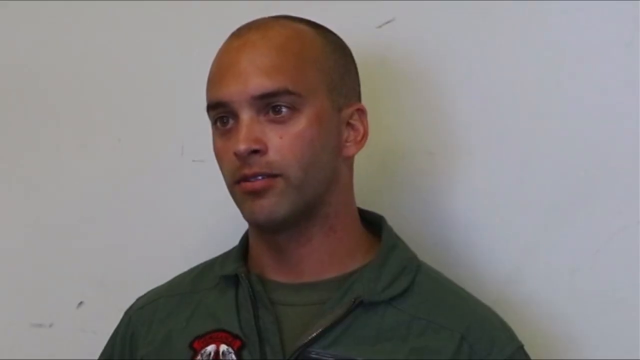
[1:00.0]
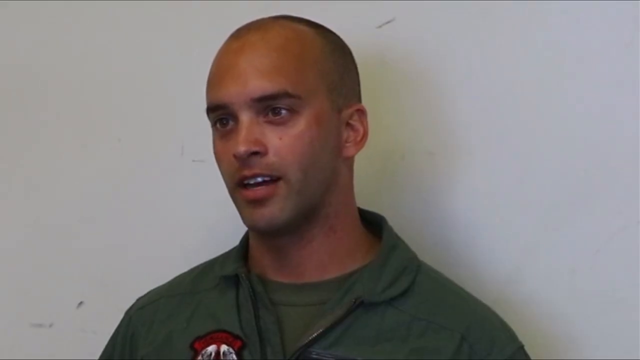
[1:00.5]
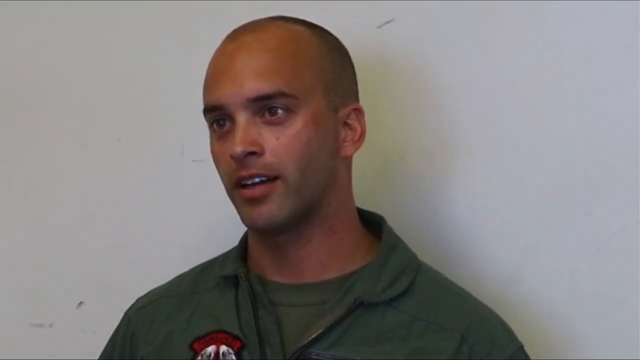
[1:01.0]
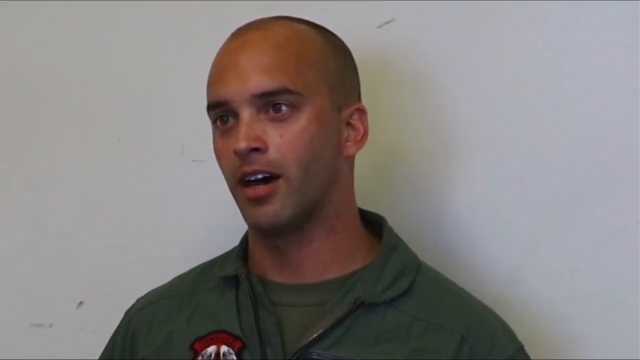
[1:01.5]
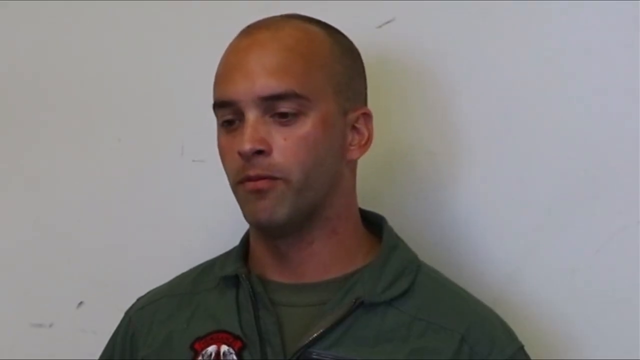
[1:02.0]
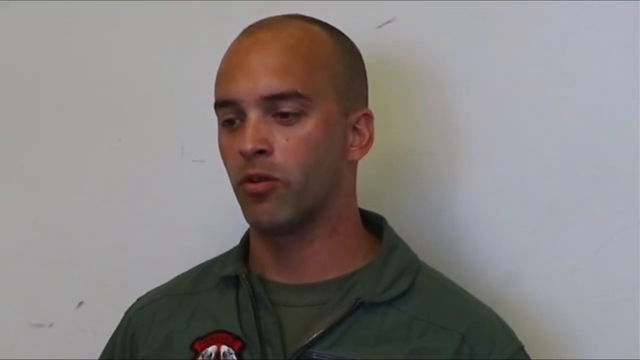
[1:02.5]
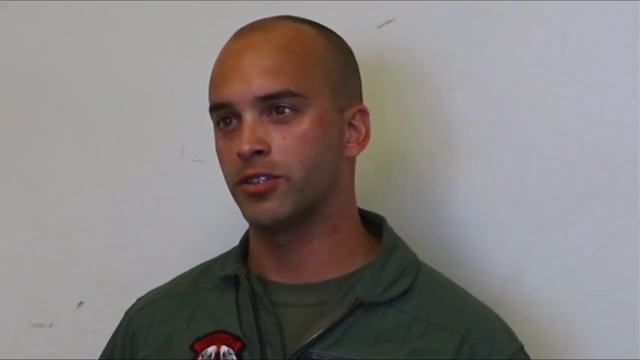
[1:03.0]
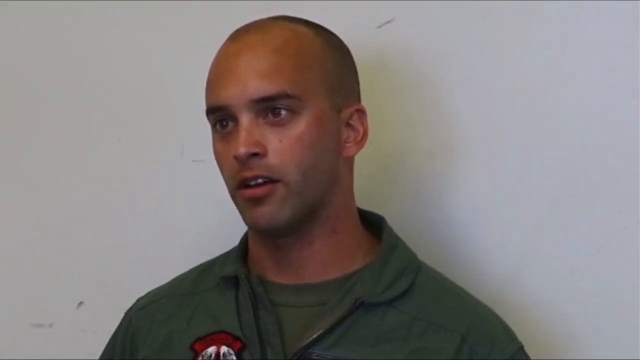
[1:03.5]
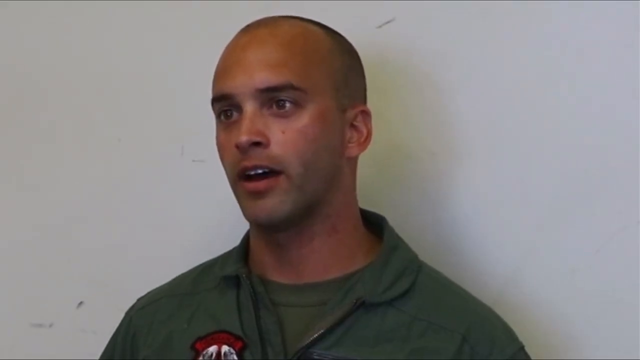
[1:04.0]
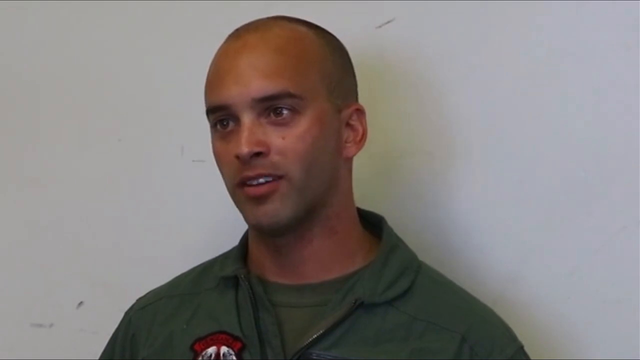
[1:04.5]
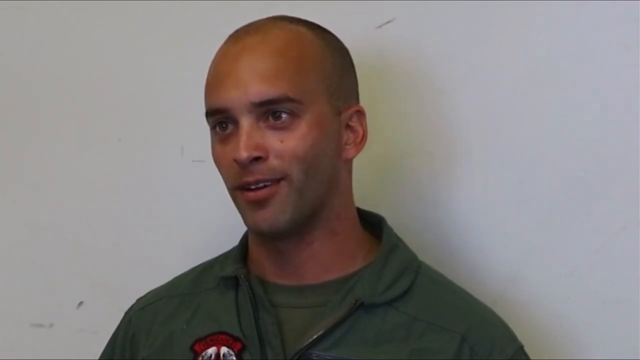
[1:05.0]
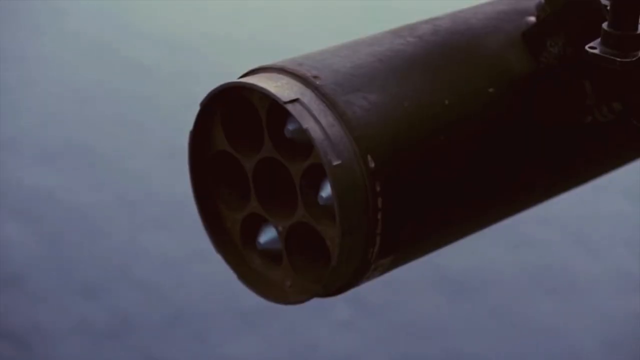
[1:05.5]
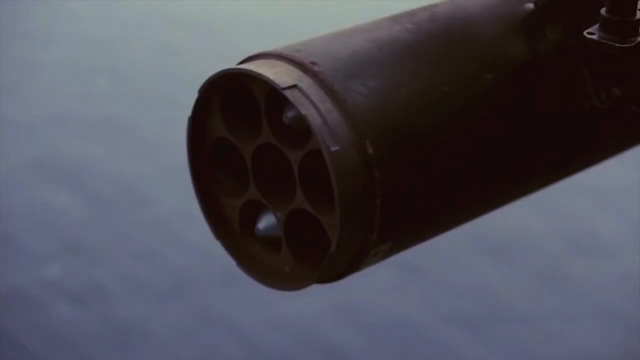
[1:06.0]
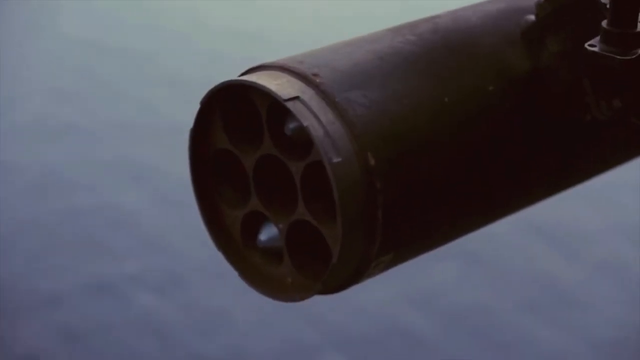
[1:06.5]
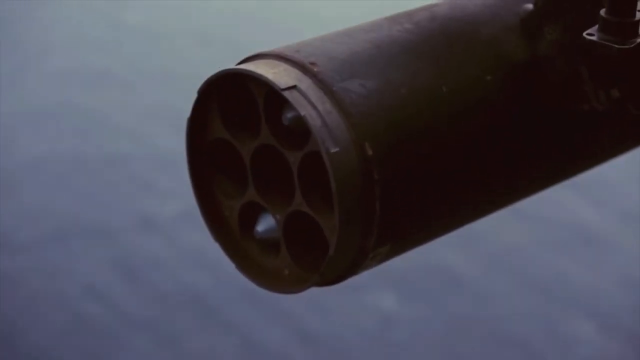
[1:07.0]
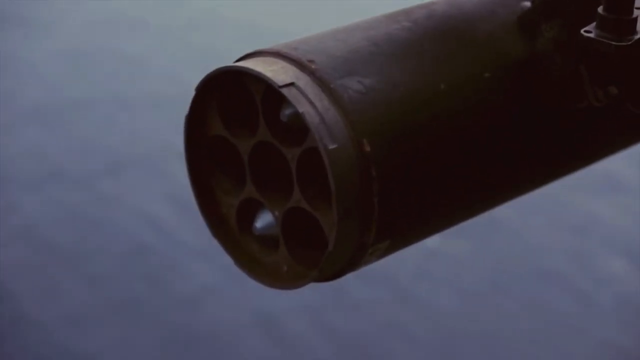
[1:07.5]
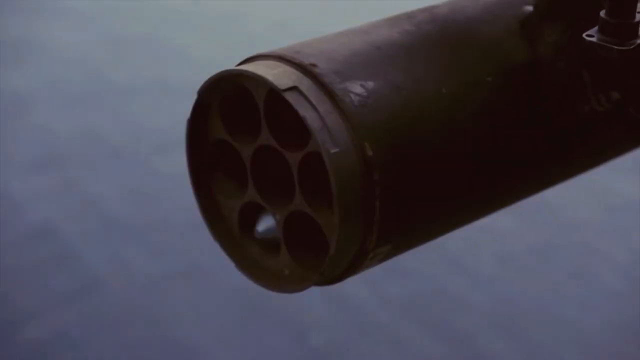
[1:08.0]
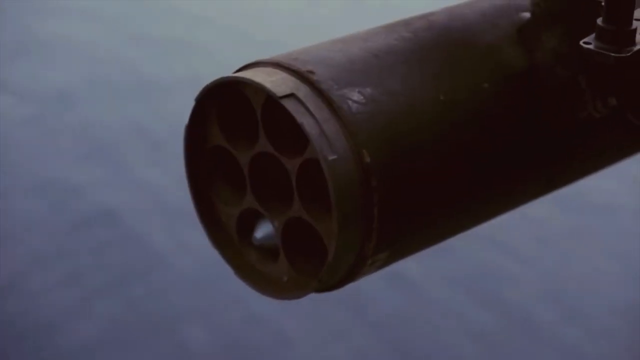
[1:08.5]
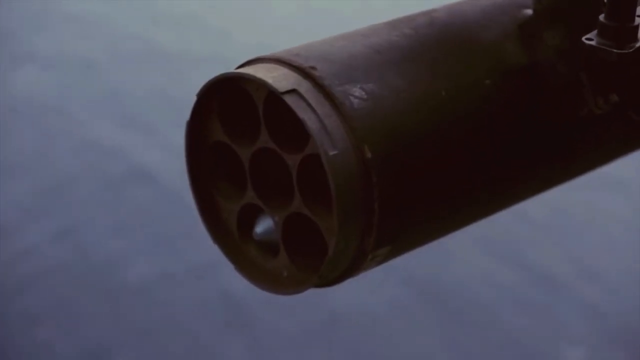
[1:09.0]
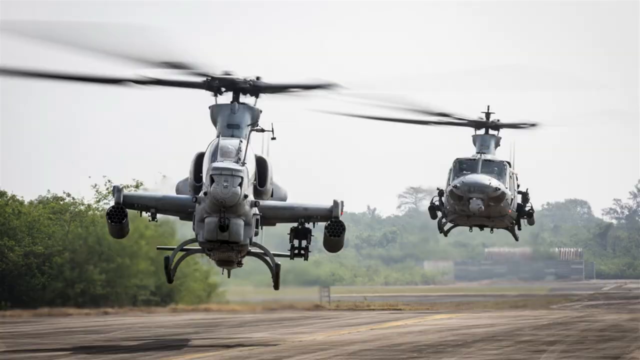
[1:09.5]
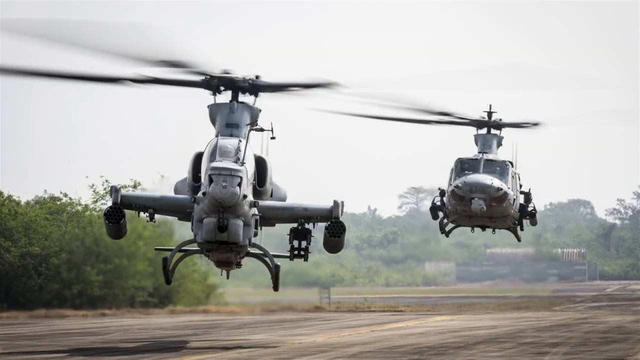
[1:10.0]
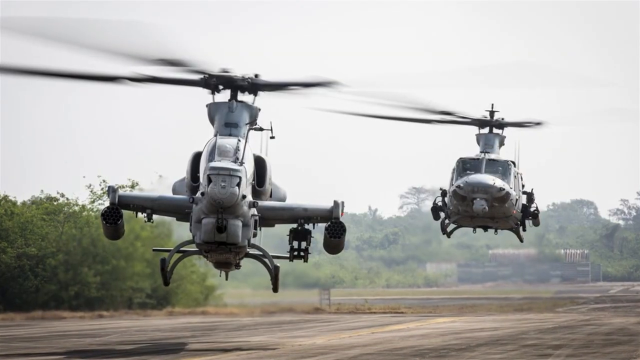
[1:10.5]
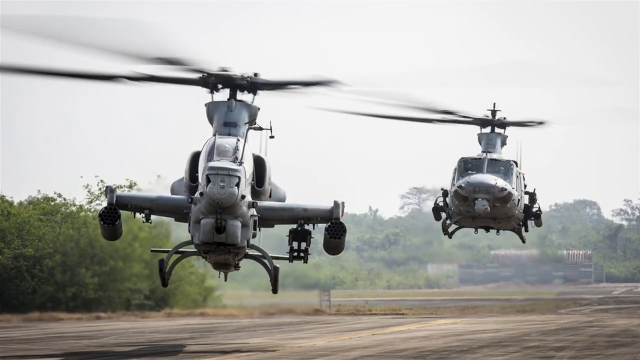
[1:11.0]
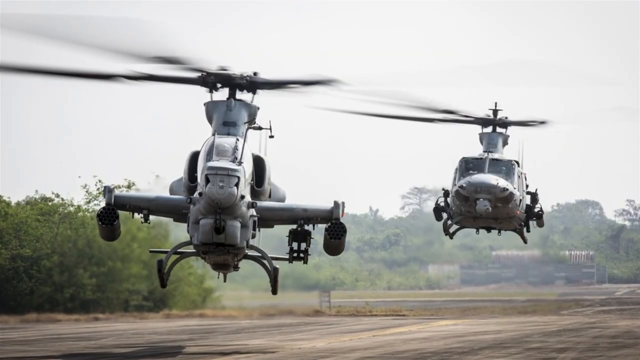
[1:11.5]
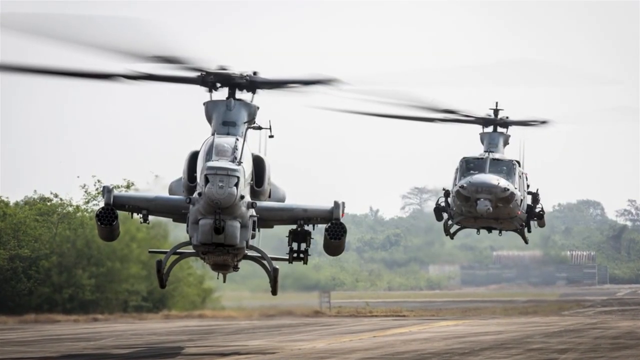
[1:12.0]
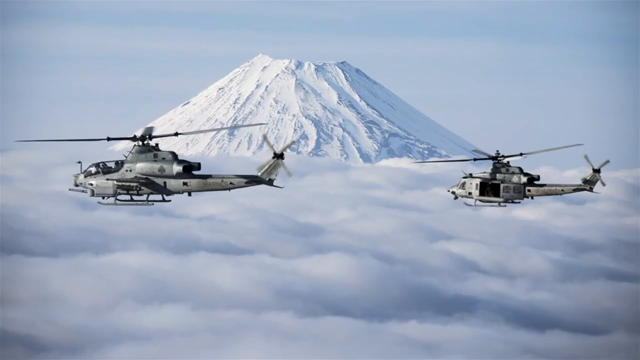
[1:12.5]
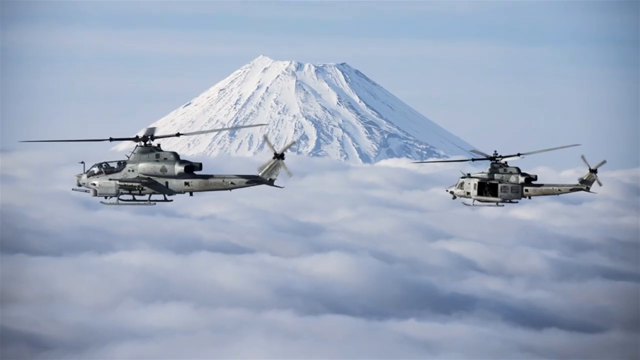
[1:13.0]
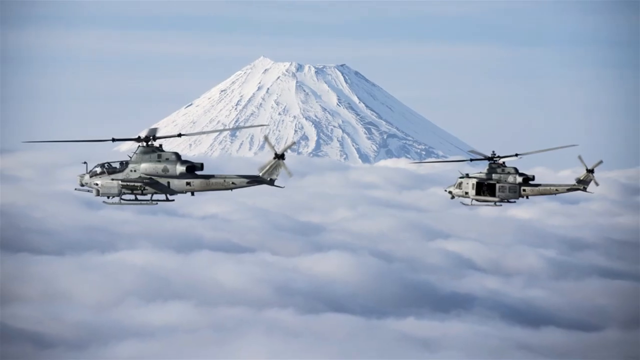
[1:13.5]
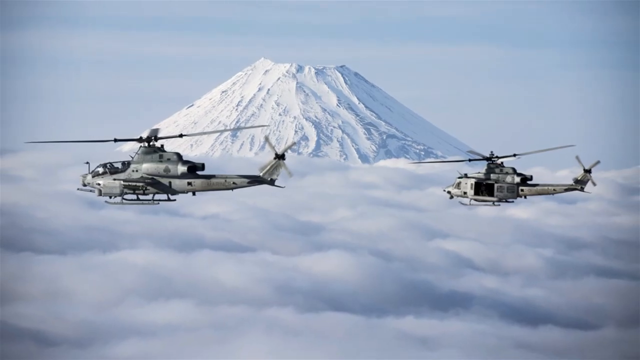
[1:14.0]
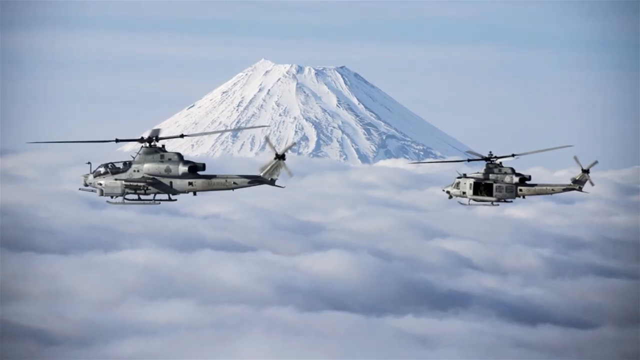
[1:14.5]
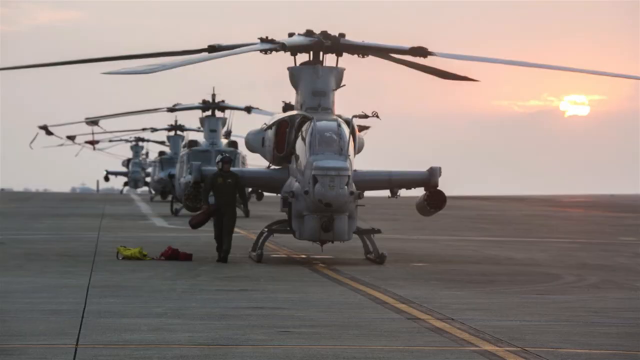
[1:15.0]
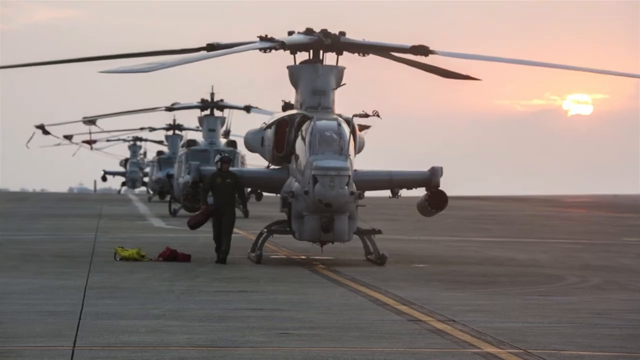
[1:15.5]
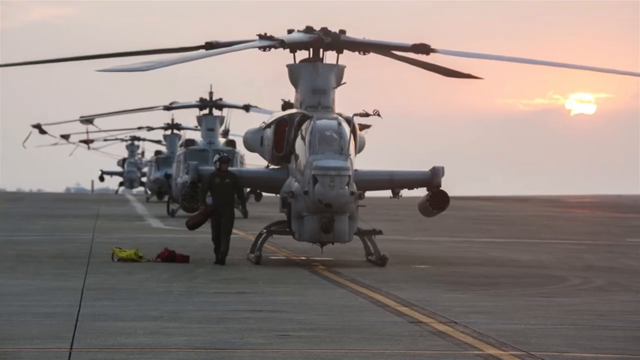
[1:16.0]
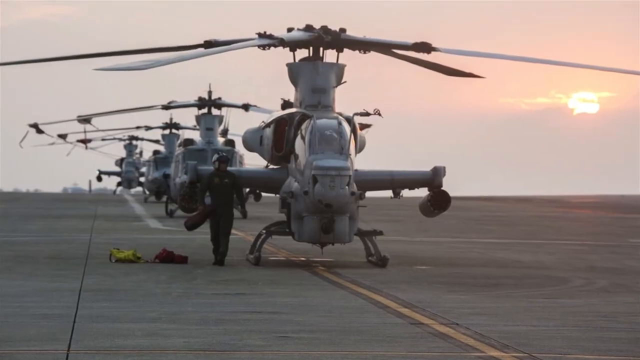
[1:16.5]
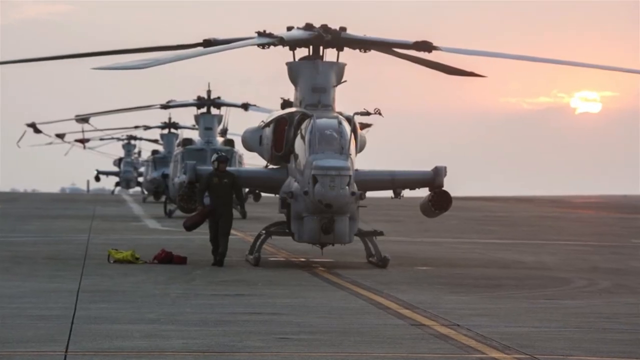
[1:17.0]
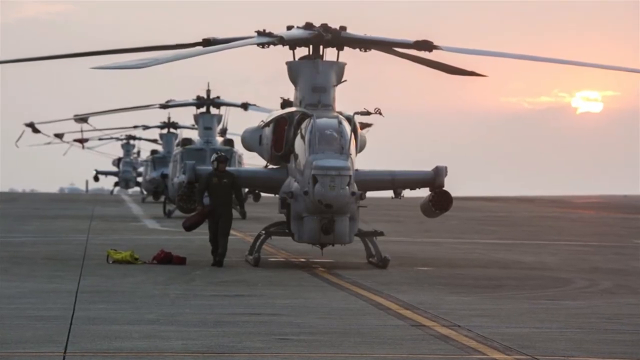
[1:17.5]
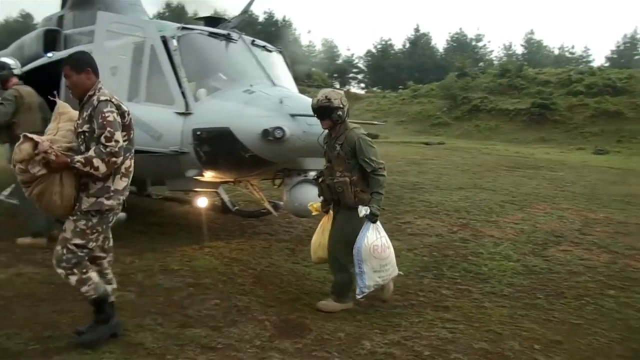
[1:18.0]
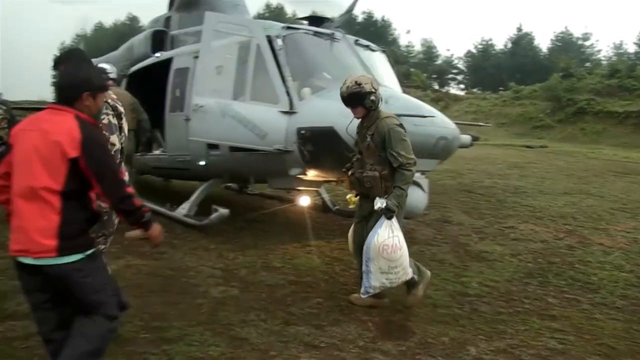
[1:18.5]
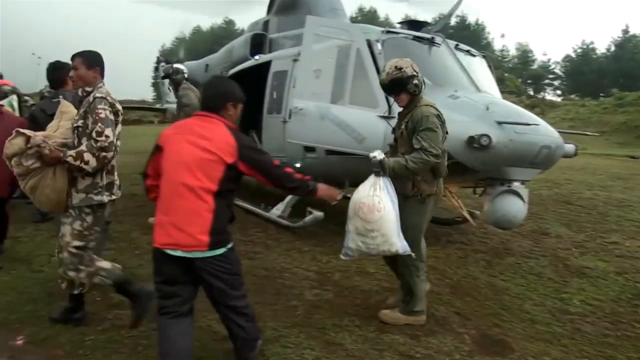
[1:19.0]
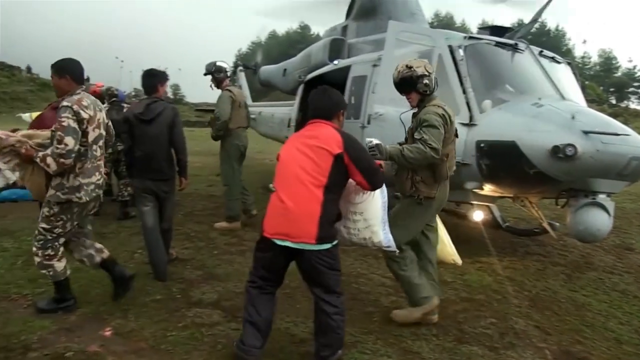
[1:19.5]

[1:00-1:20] A Marine dressed in green talks to the camera. Apparently three different missiles are fired. Helicopters painted white fly over a snowy mountain in white cloud cover. A group of Marines gets off a helicopter and delivers supplies to what look like natives or people in need of aid, handing them bags that appear to contain food and supplies. The people look grateful to receive the supplies and carry them away, possibly to their homes. They do not look American and appear to be indigenous to a country in South America.